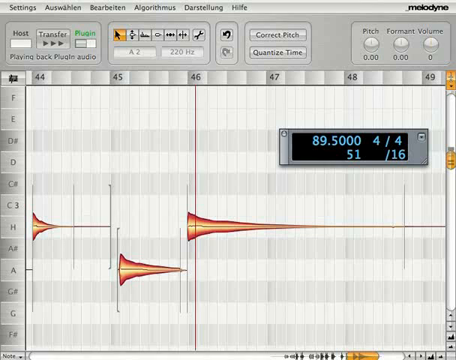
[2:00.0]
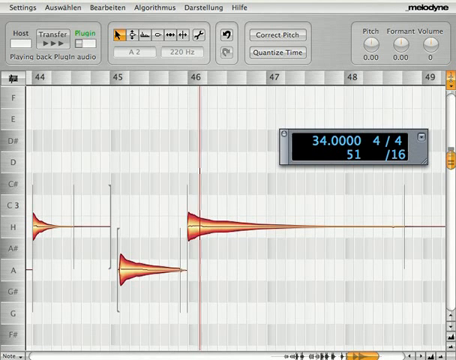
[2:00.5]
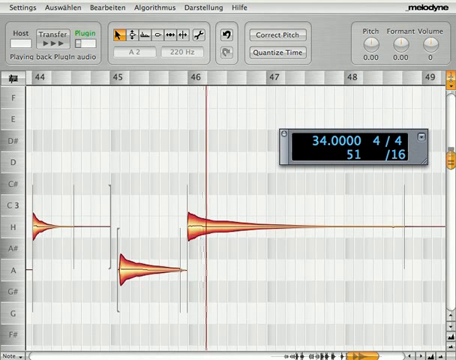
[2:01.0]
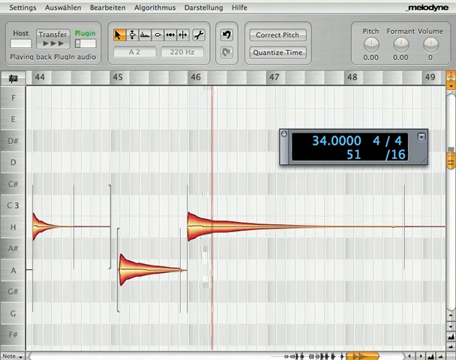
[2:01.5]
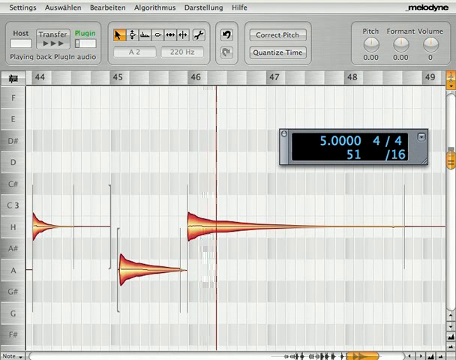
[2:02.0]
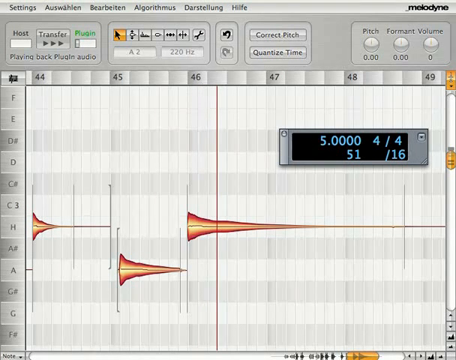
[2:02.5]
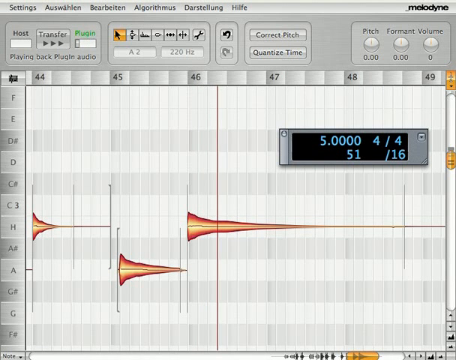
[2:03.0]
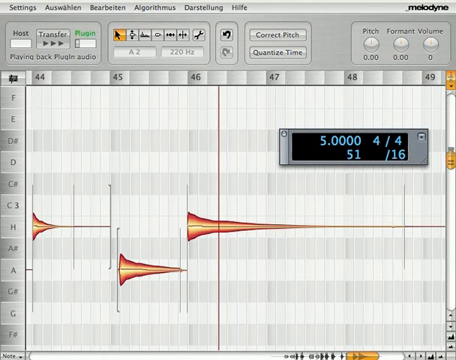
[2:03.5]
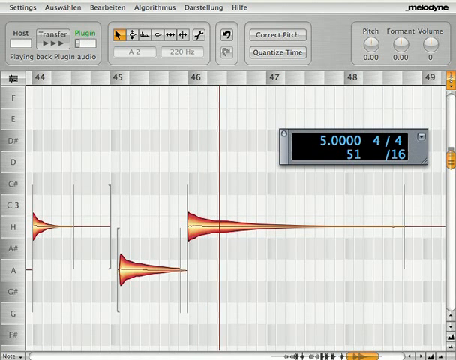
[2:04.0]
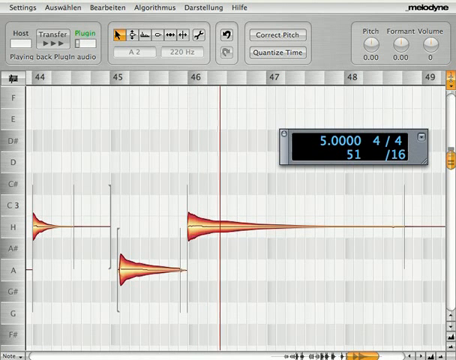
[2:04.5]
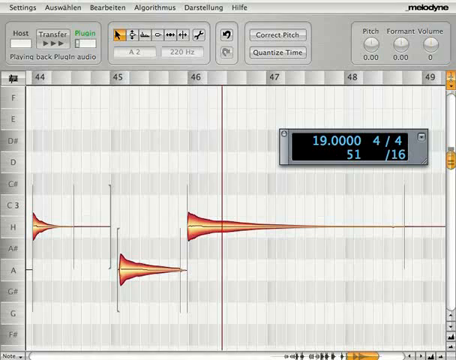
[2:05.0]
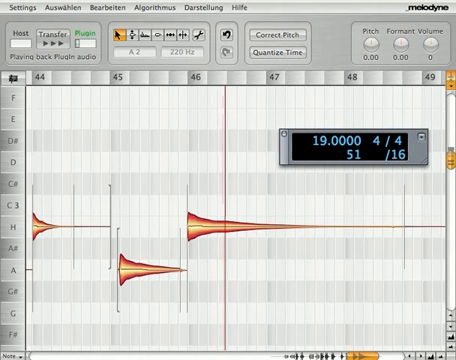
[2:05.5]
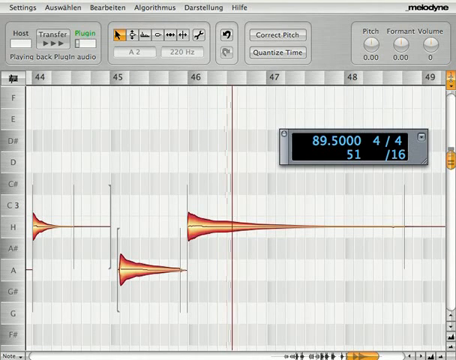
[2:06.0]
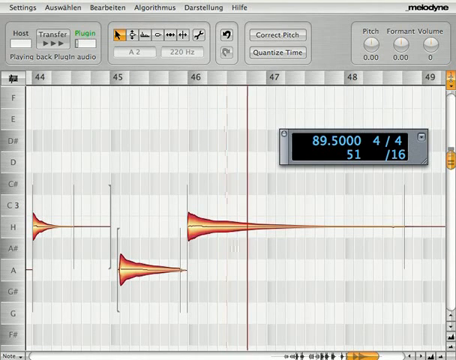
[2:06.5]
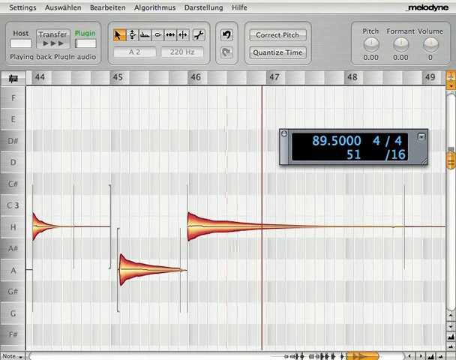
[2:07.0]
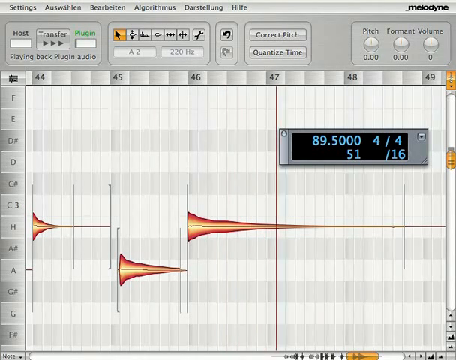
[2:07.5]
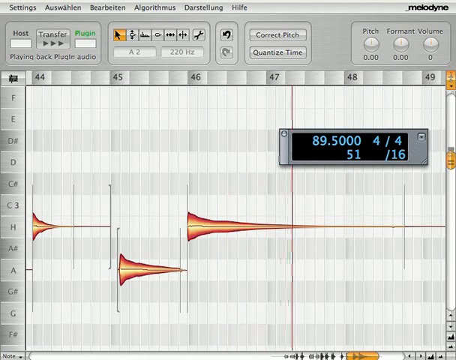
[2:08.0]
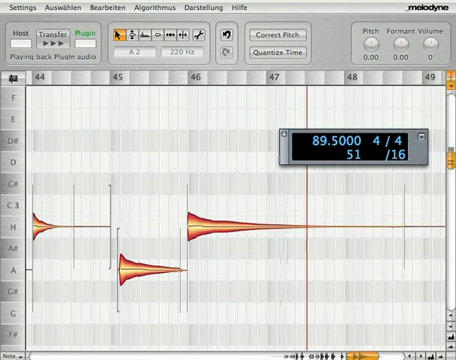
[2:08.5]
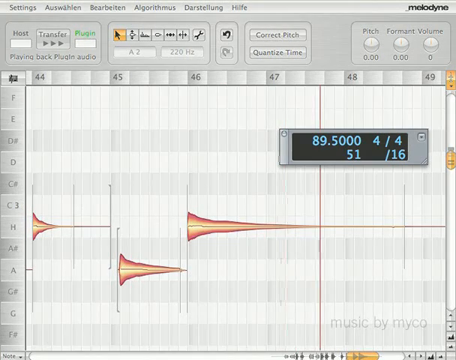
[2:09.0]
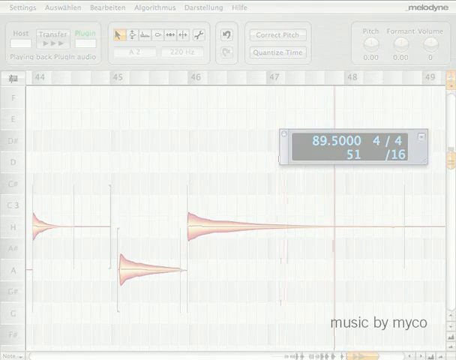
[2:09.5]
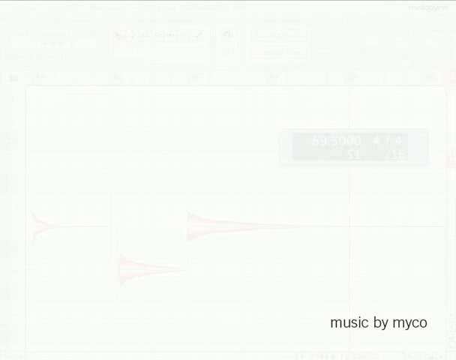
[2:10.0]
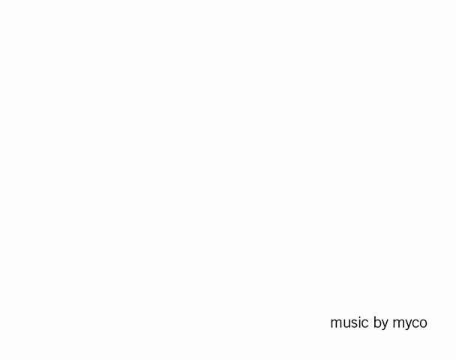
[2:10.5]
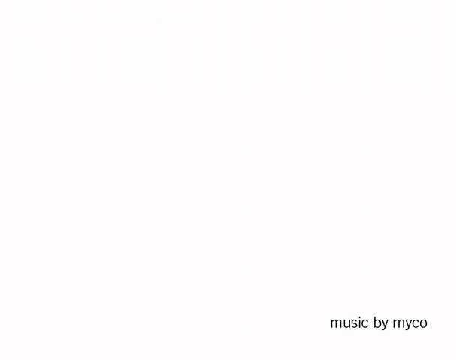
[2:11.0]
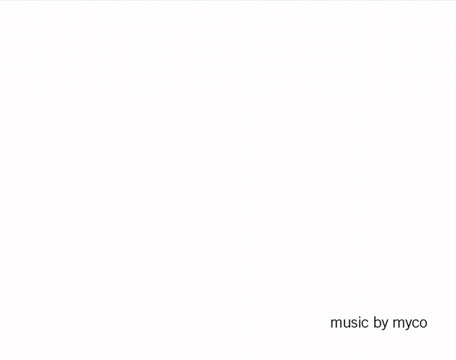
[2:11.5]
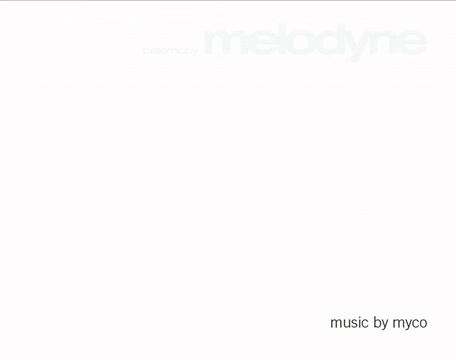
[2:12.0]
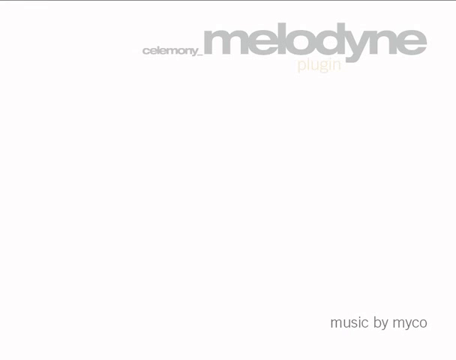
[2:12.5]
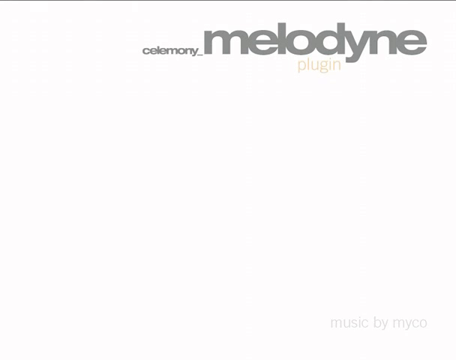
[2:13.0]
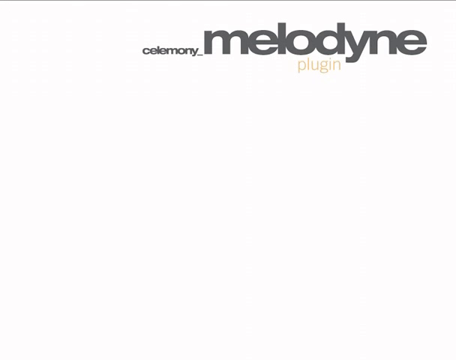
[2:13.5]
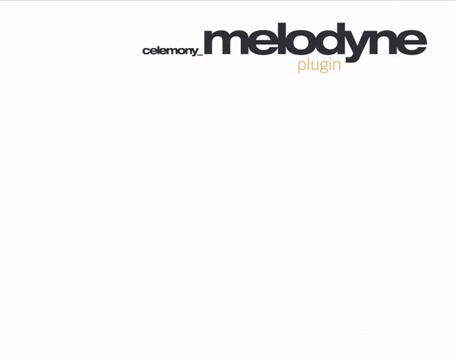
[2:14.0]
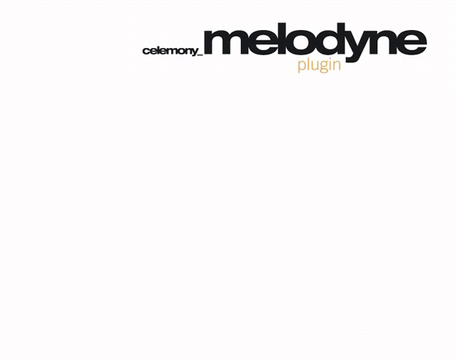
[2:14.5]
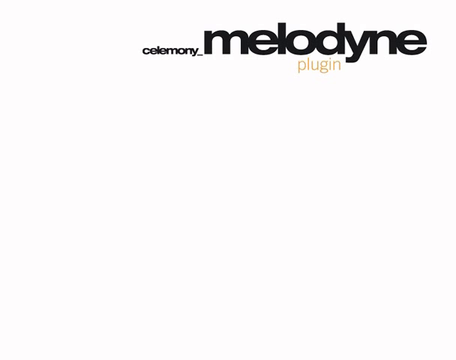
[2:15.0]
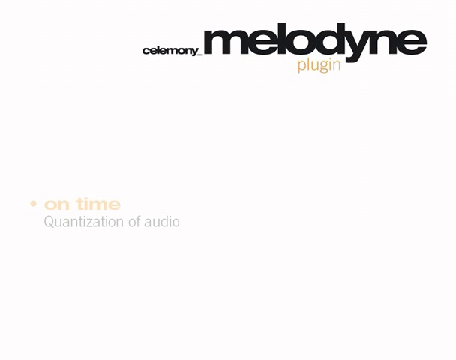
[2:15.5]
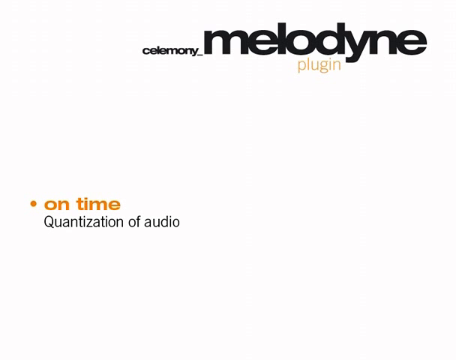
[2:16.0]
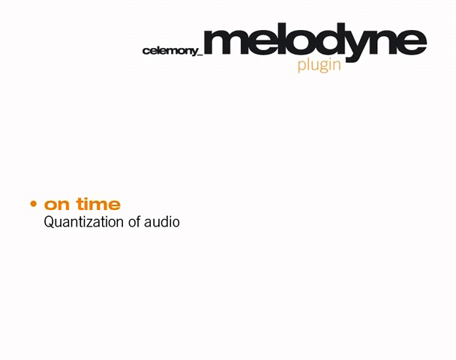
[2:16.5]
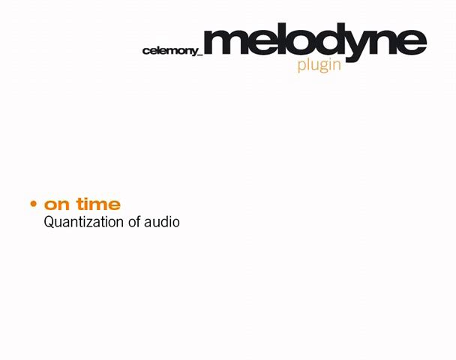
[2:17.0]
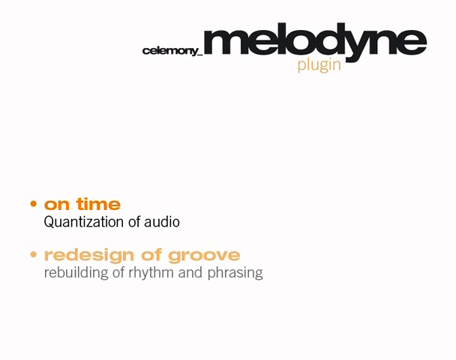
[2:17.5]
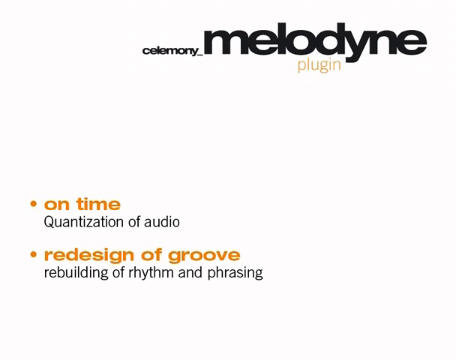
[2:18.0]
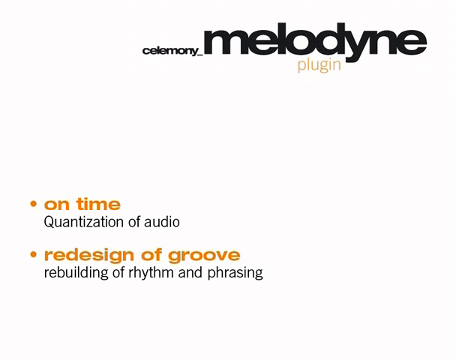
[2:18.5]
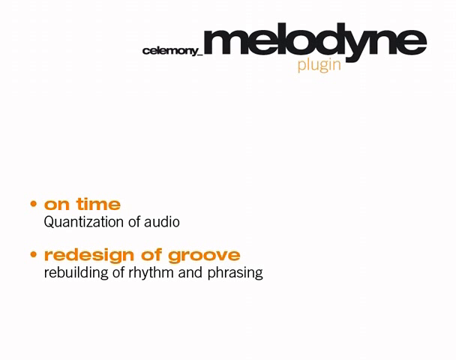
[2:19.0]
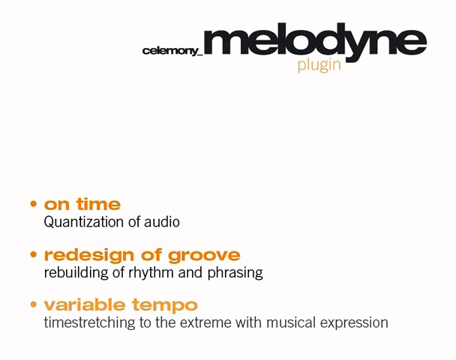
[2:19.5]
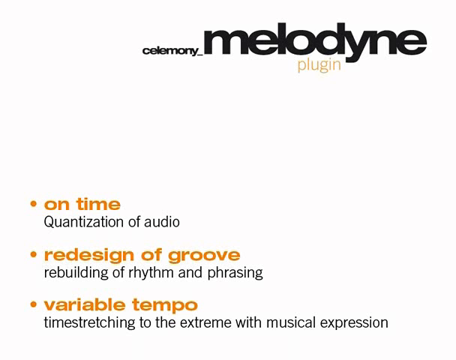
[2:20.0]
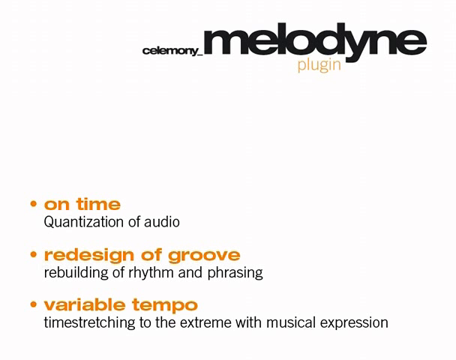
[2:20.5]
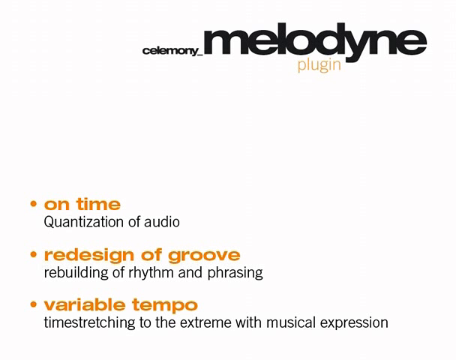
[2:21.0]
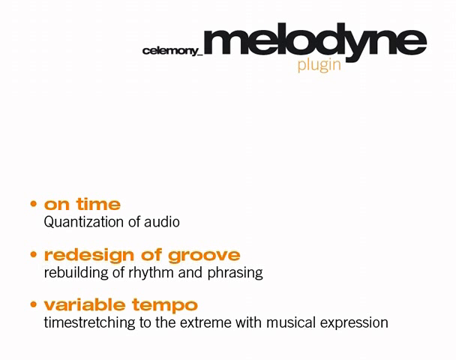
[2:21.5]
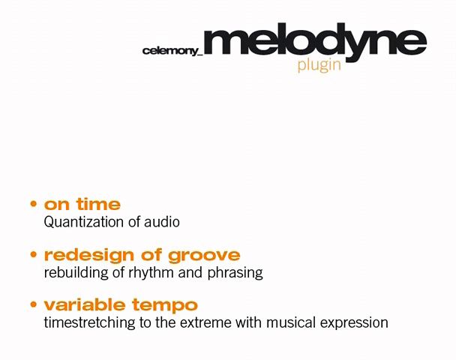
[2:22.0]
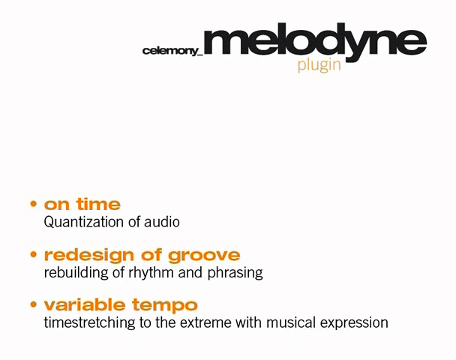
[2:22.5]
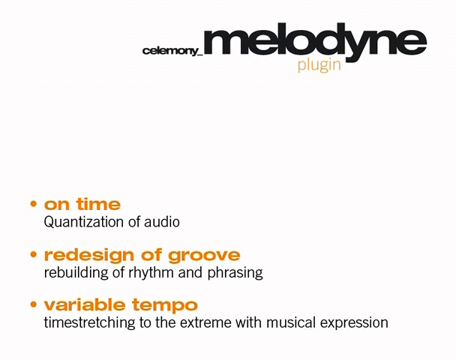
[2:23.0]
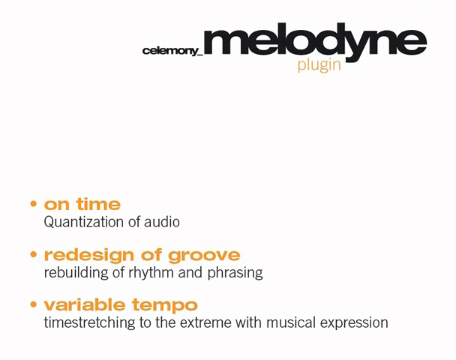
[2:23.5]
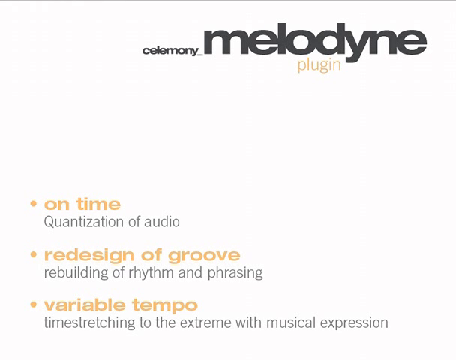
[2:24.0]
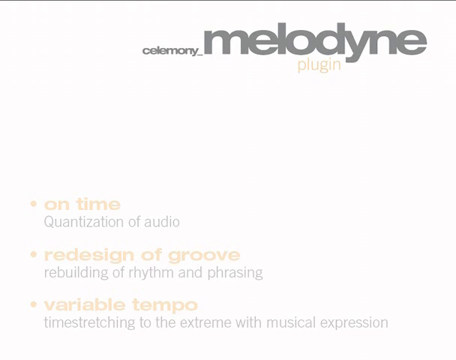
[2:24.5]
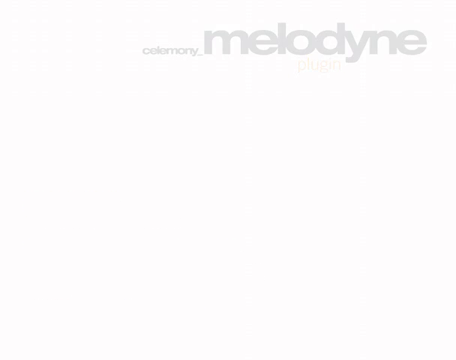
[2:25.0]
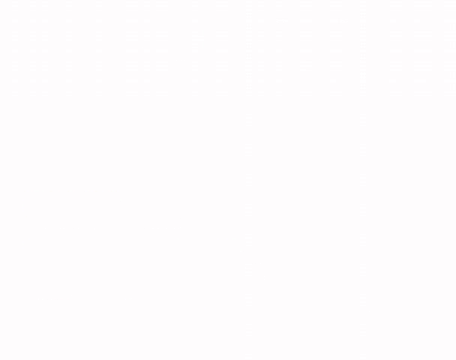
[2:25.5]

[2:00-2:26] The track is on a very long note lasting about four seconds, and the demonstration ends. Key messages then appear: on time, the quantization of audio, redesigning the groove by rebuilding both rhythm and phrasing, creating a variable tempo, and users being able to time stretch to the extreme with their desire for musical expression. A credit states the music was created by Myco, and the video ends on a blank screen.